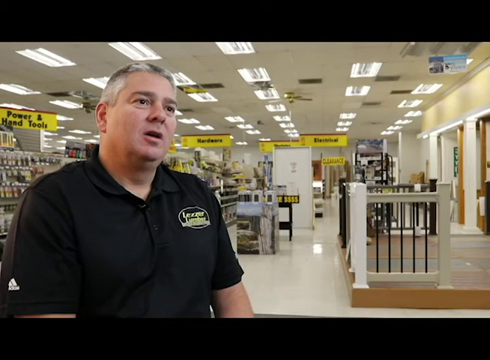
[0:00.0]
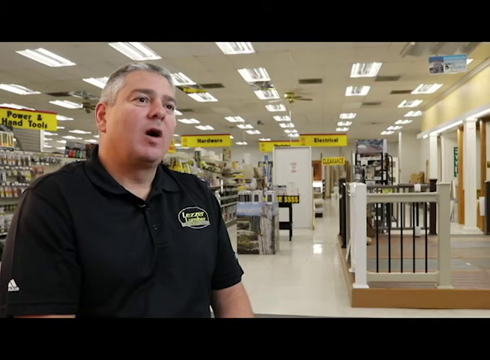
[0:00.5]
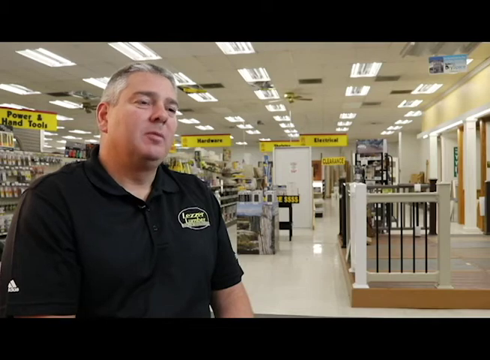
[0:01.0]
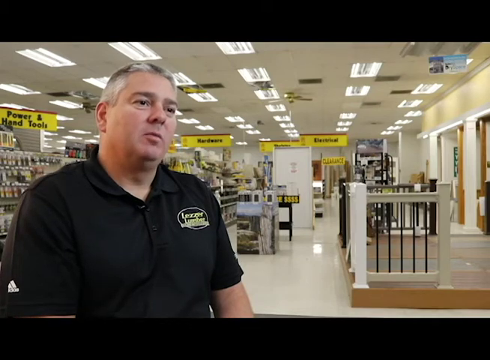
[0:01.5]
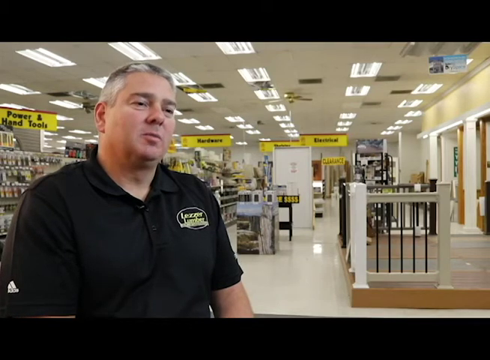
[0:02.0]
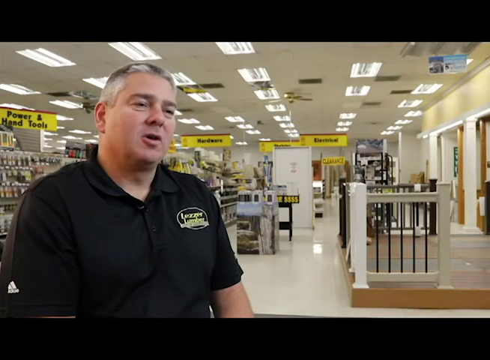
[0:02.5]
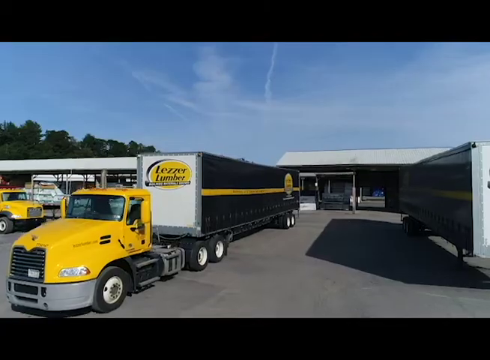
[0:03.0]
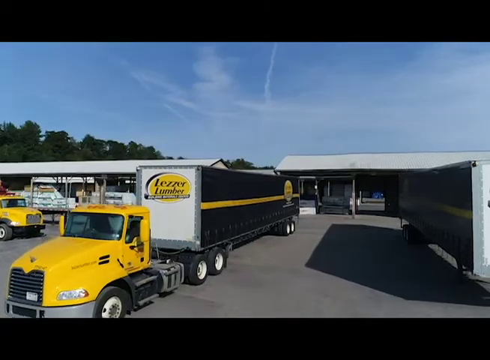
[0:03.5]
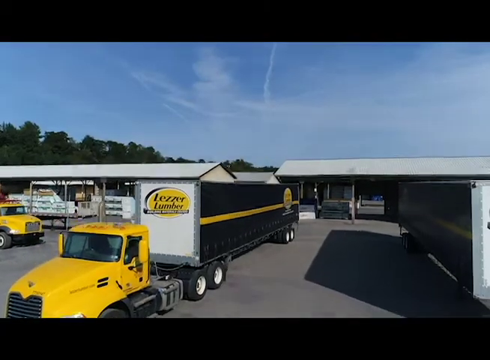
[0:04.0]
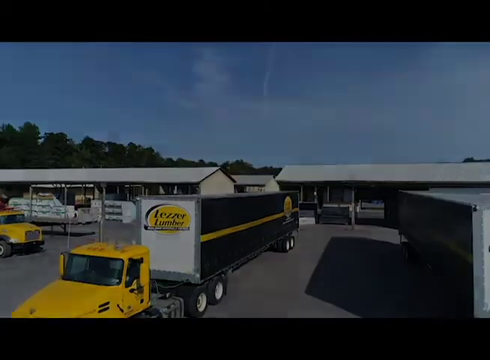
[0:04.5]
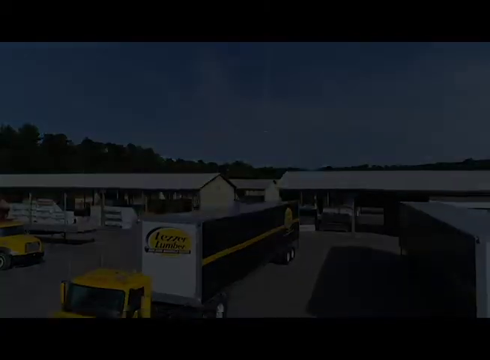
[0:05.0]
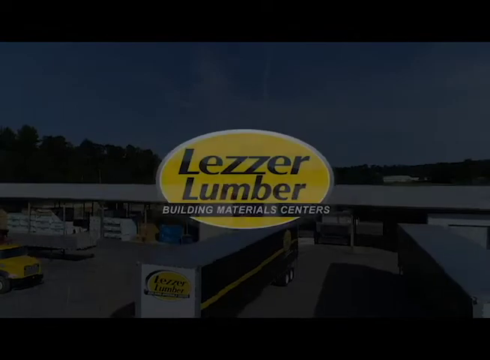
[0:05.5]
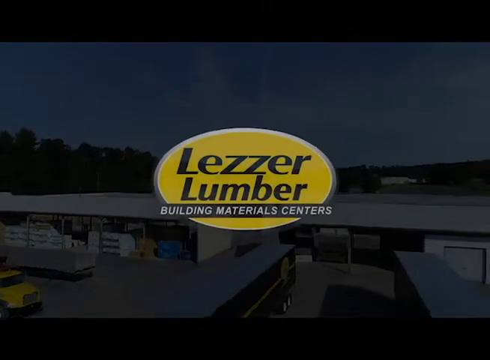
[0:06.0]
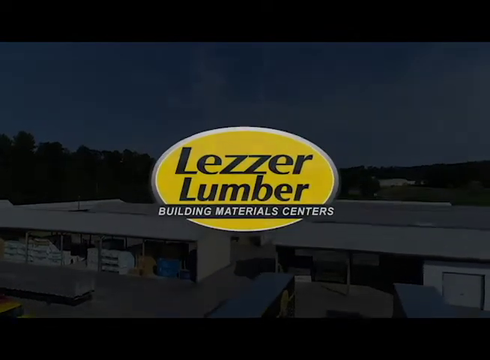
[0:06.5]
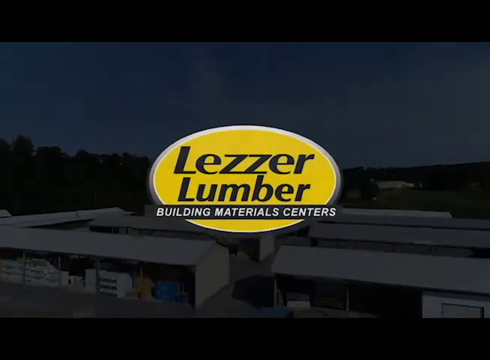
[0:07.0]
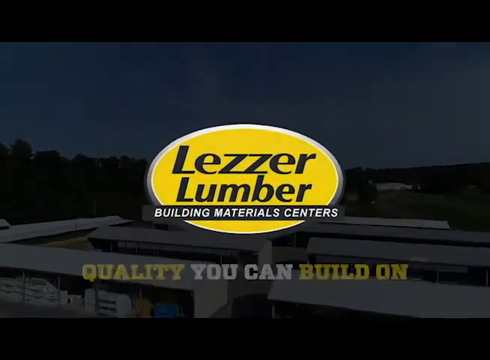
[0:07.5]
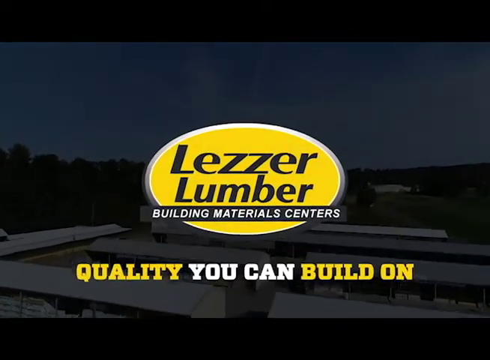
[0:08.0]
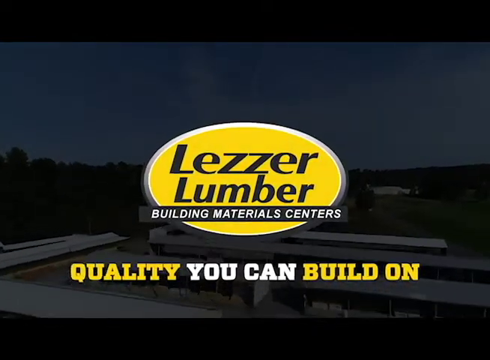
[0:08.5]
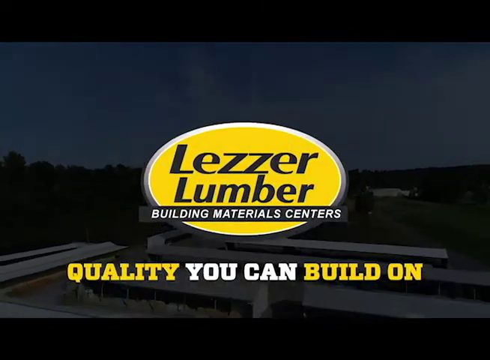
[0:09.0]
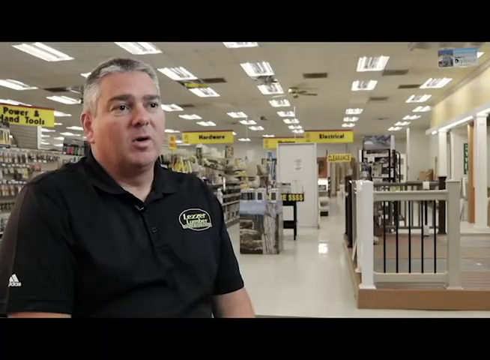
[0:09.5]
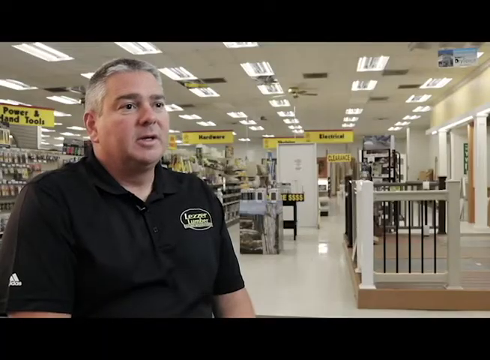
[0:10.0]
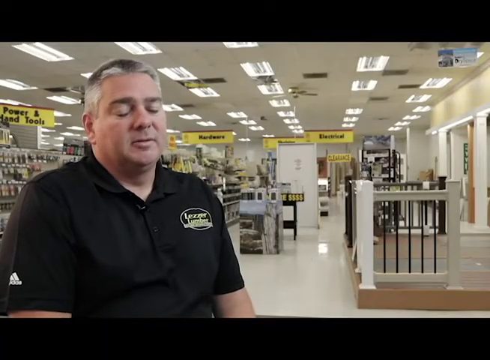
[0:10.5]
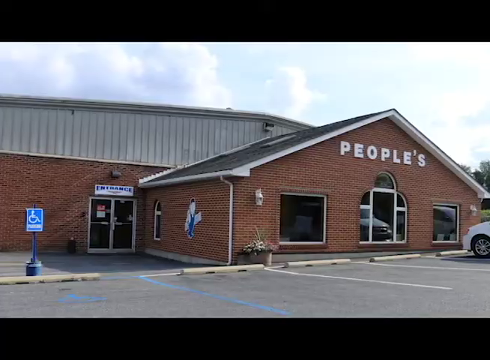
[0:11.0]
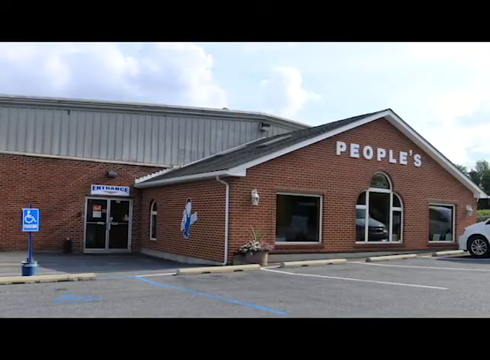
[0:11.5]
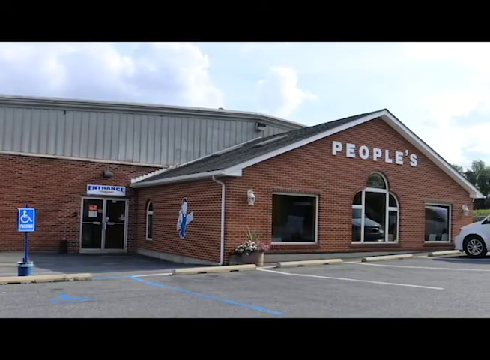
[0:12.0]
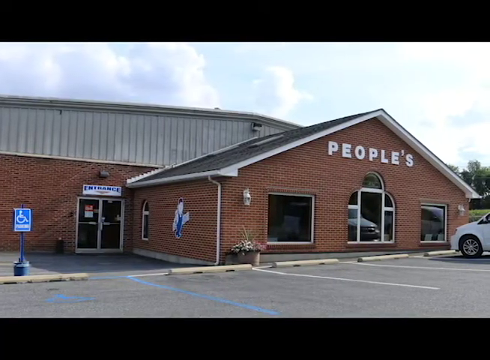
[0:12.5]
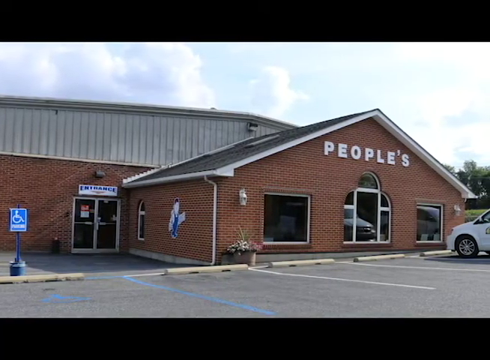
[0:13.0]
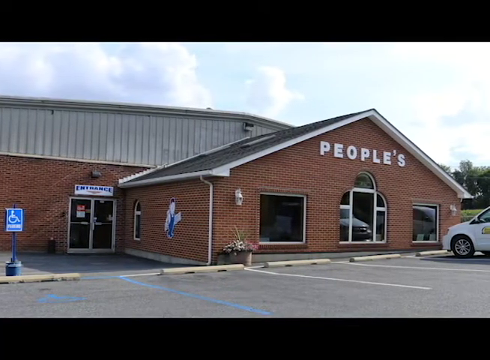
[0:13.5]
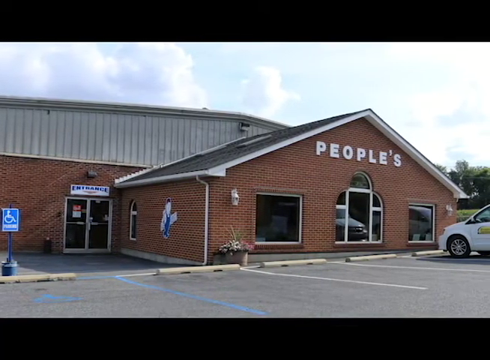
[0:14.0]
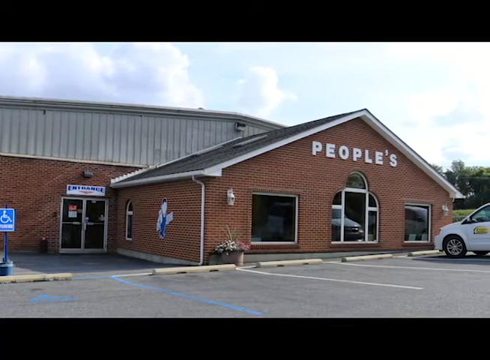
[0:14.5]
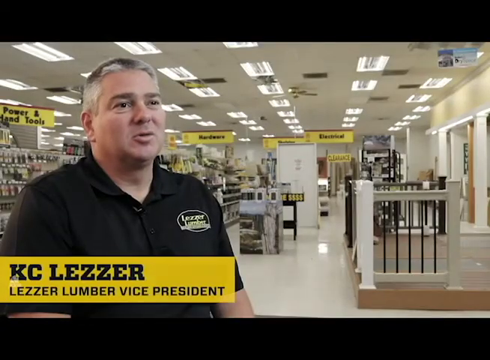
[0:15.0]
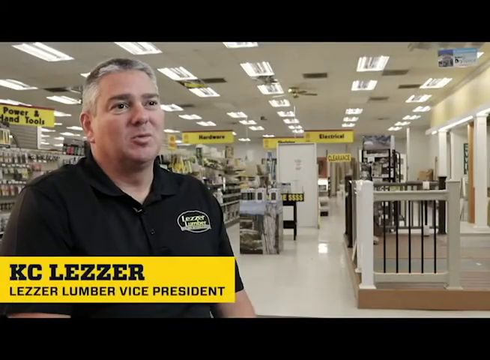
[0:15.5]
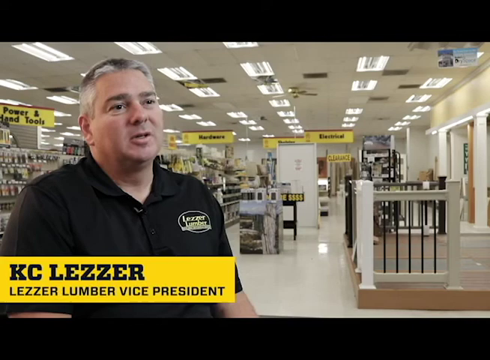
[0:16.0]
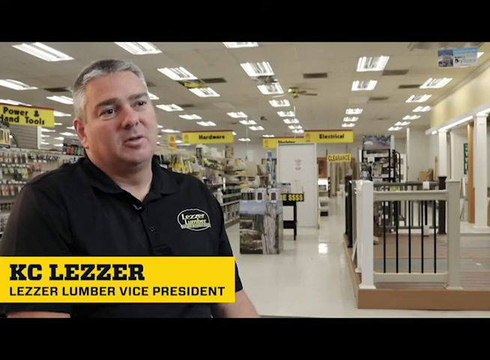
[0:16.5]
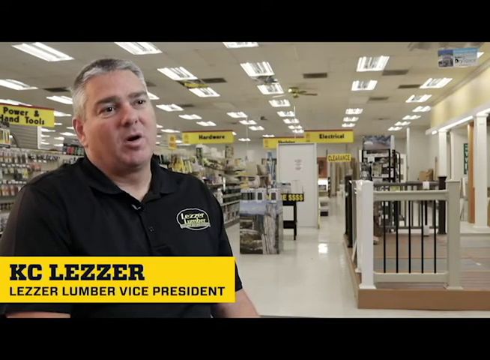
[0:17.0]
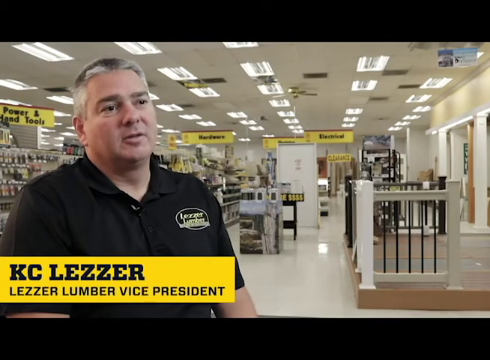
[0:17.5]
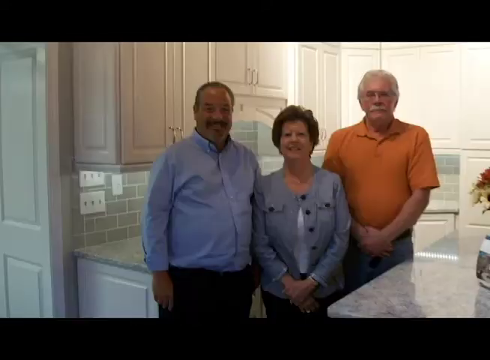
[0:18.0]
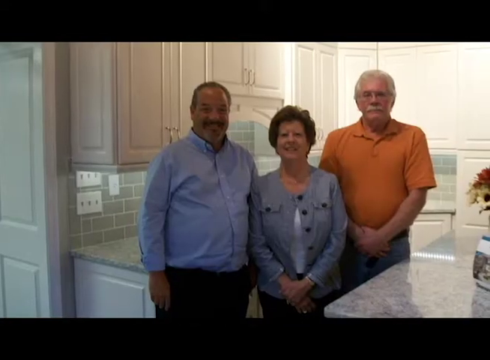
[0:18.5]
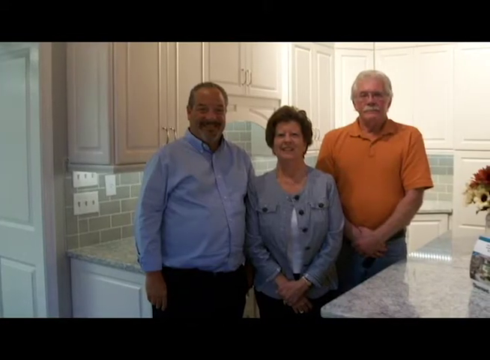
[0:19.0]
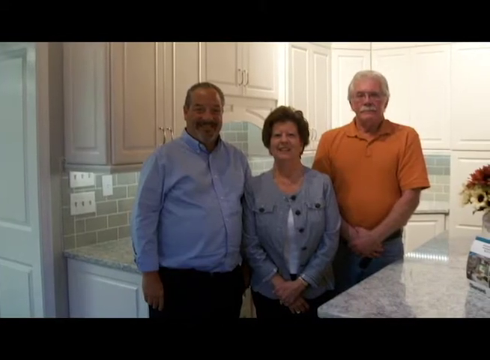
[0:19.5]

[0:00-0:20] A man talks inside a store, with multiple yellow signs behind him; one says "power and hand tools", one says "hardware" and one says "electrical", while some of the others can't really be read. There is a platform to the right in the store. He is talking to somebody off camera. The shot then moves to multiple trucks outside, including one long 18-wheeler type of truck with a yellow cab. Behind the truck are a couple of buildings and trees, and the skyline is visible. A logo pops up over the picture reading "Leaser Lumber, building materials, centers, quality you can build on." The video returns to the man who was talking, then quickly jumps to a shot of the front of a building with a pointy roof and "Peoples" on it. There is a handicapped spot to the left, and part of a car is visible to the right as the camera pans over toward it. The next shot is of the same man, with the name "Casey Leaser" popping up over him; he is the Leaser Lumber Vice President. The next shot shows three people in a room getting their picture taken.